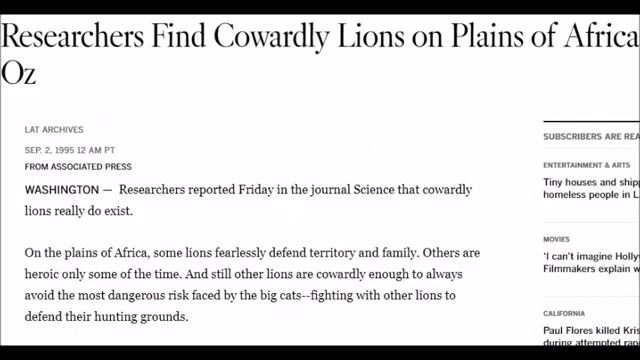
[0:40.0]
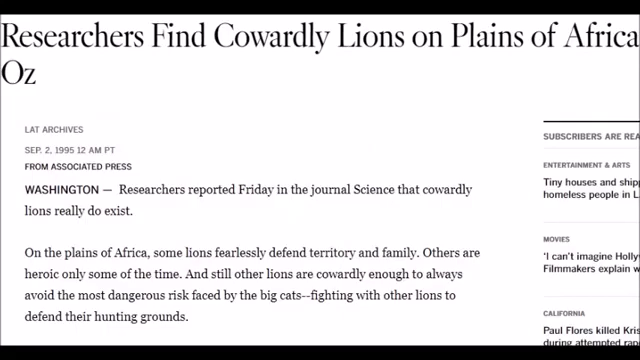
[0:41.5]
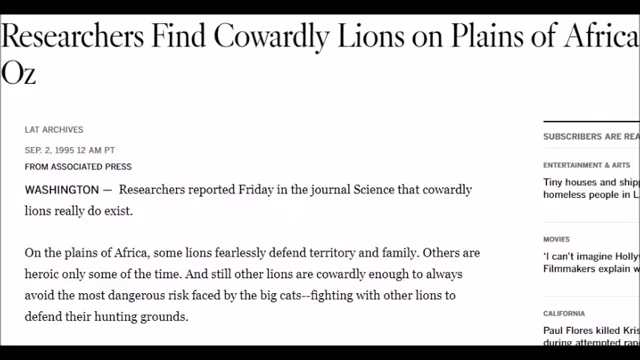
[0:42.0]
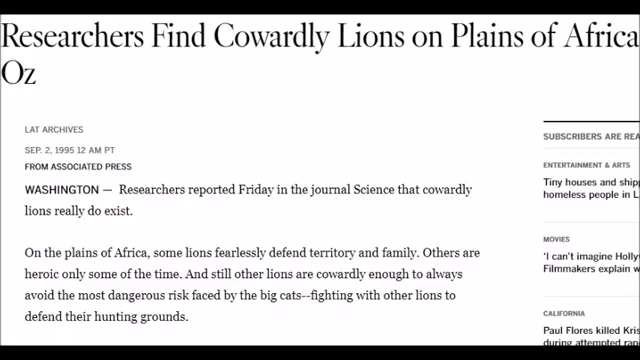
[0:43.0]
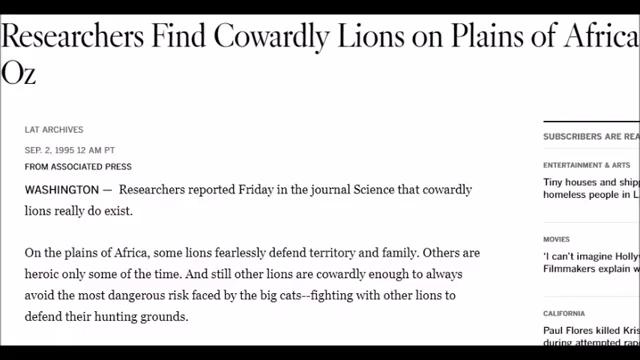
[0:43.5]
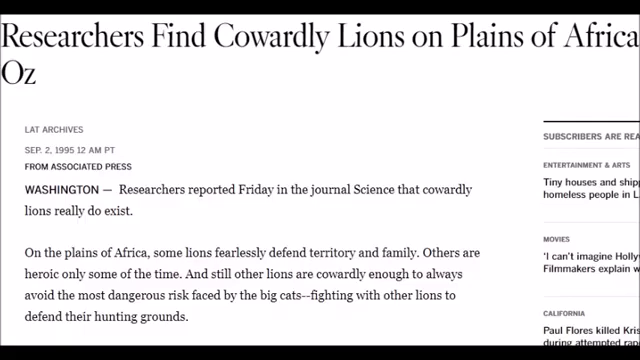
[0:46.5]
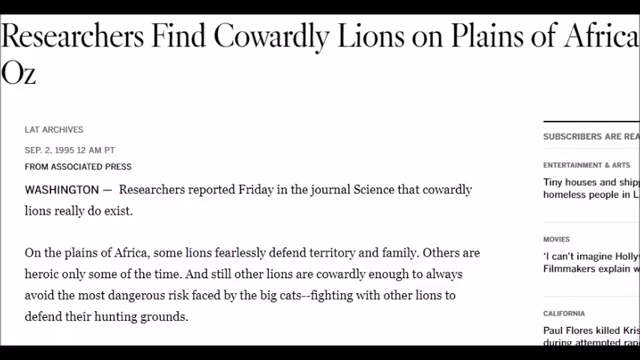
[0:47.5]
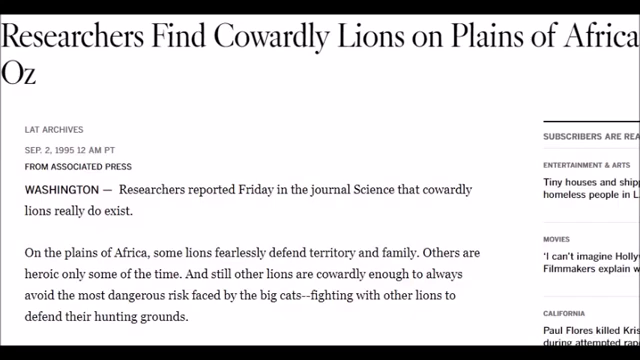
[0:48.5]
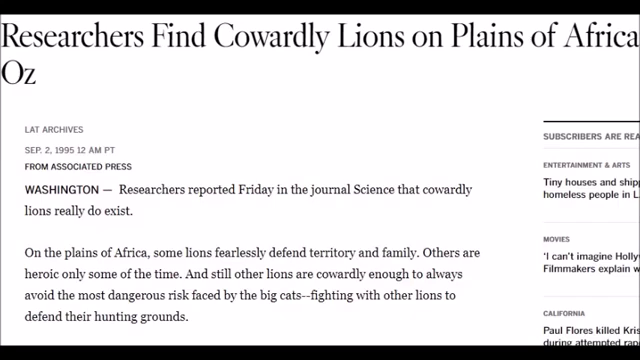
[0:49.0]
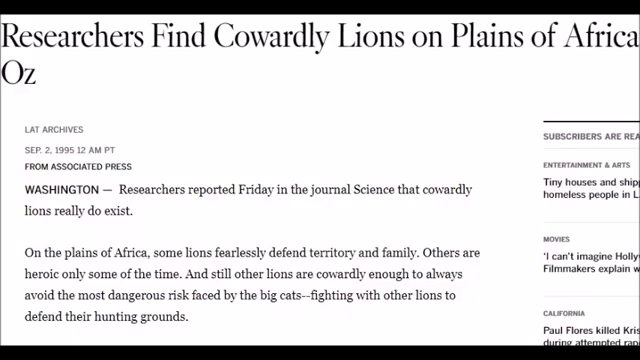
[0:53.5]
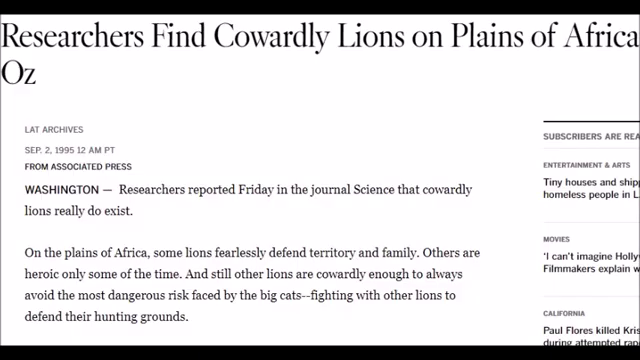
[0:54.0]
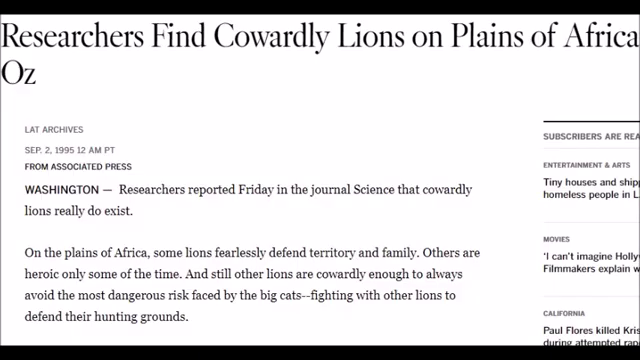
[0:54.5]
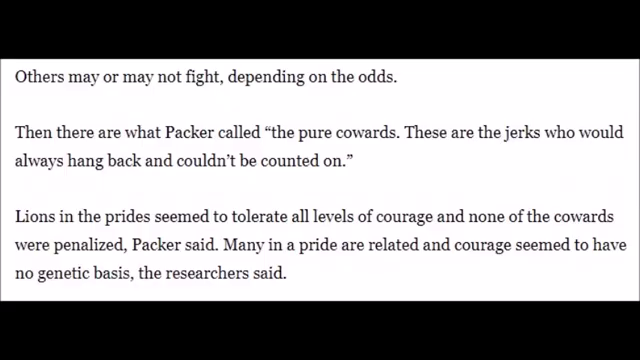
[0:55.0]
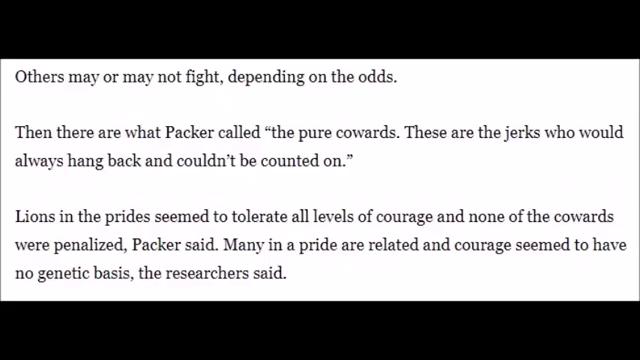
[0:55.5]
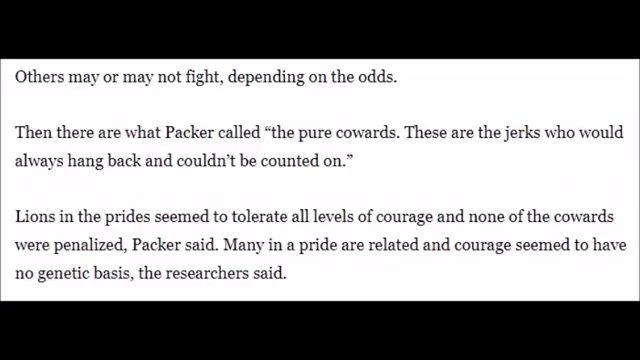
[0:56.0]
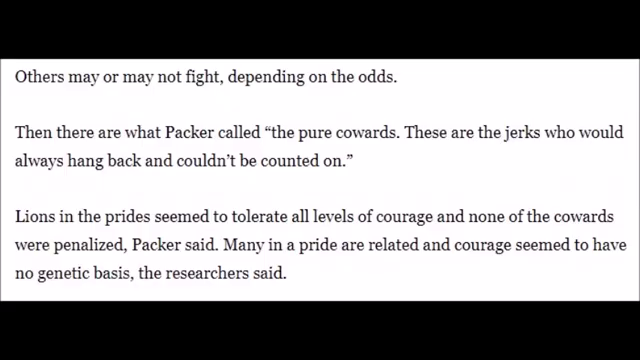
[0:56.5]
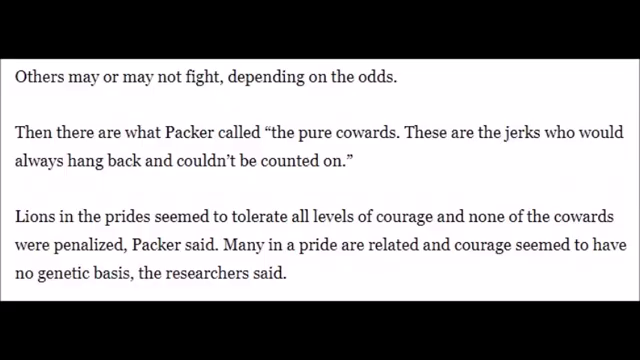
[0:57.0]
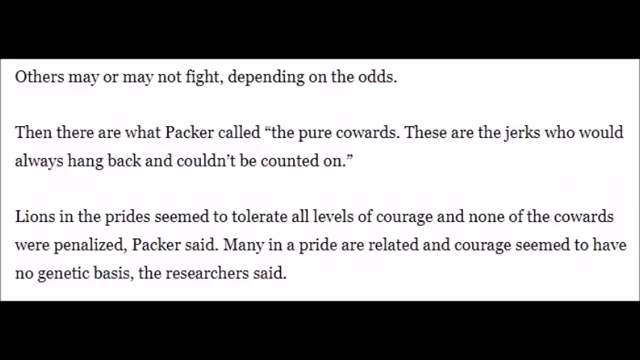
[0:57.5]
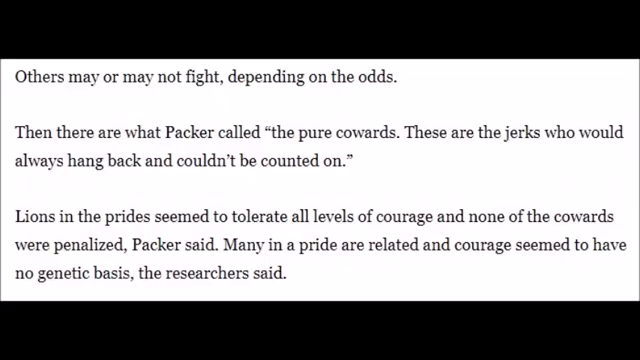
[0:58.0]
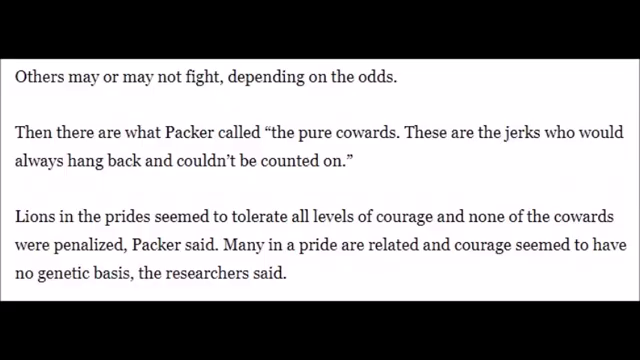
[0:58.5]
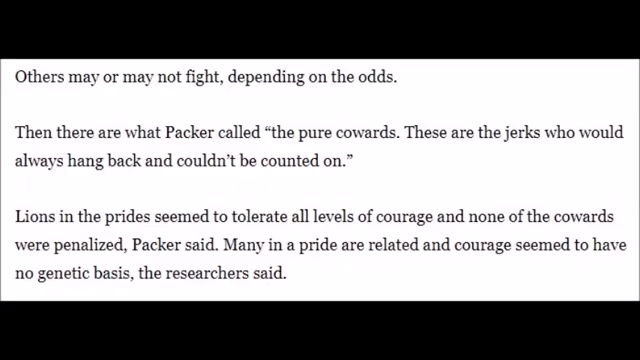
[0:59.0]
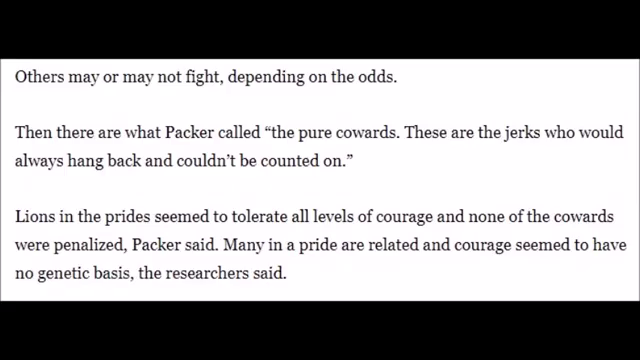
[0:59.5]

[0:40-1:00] An article titled "Researchers find cowardly lions on Plains of Africa Oz," from the Associated Press, is shown. It reads that "researchers reported Friday in the journal Science that cowardly lions really do exist. On the plains of Africa, some lions fearlessly defend territory and family. Others are heroic only some of the time and still other lions are cowardly enough to always avoid the most dangerous risks faced by the big cats fighting with other lions to defend their hunting territory." A second extract from an article follows: "Others may or may not fight depending on the odds. Then there are what Packer calls the pure cowards. These are the jerks who would always hang back and couldn't be counted on. Lions in the prides seem to tolerate all levels of courage and none of the cowards were penalized. Packer said many in a pride are related and courage seem to have no genetic basis."